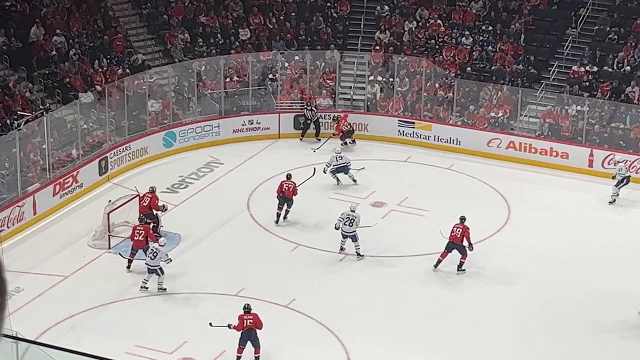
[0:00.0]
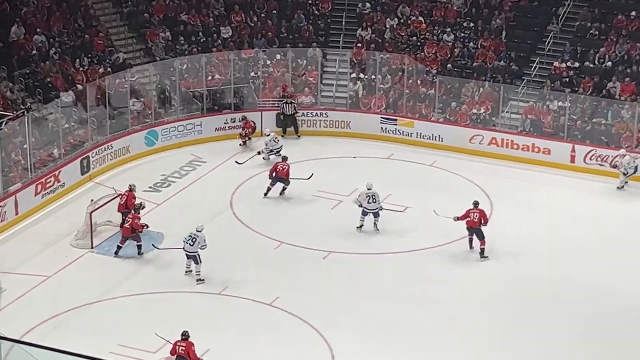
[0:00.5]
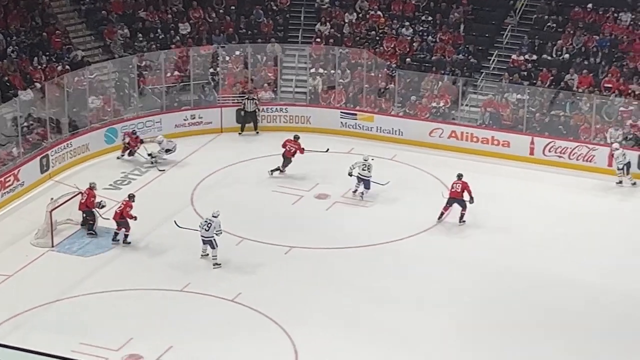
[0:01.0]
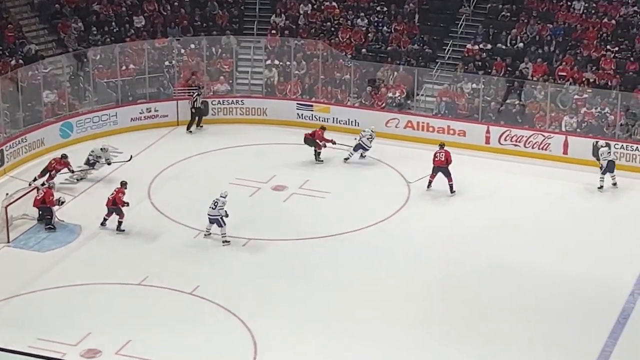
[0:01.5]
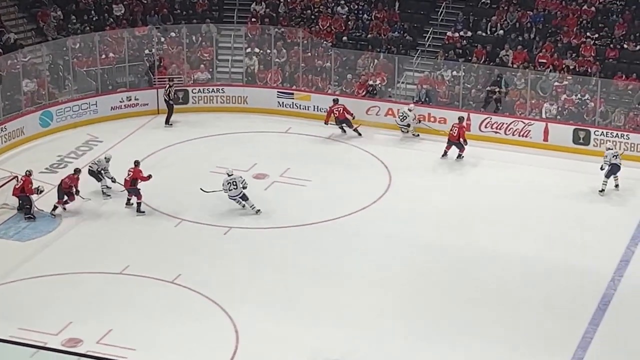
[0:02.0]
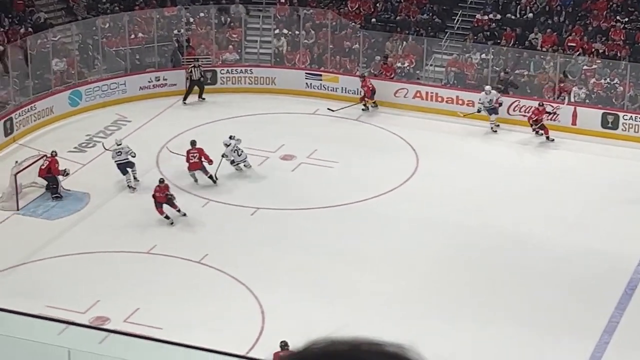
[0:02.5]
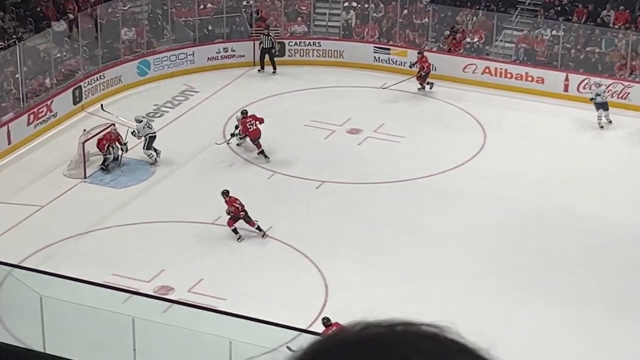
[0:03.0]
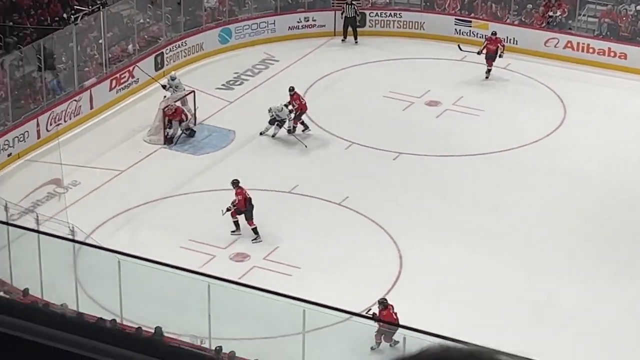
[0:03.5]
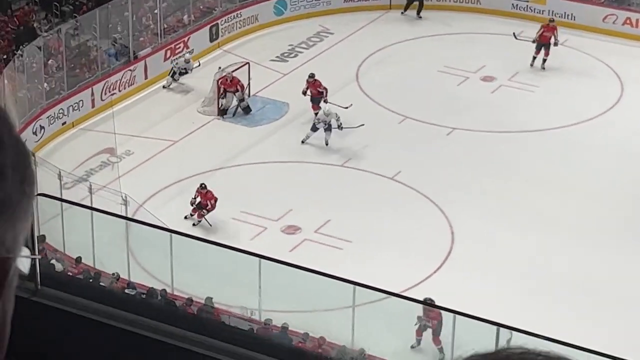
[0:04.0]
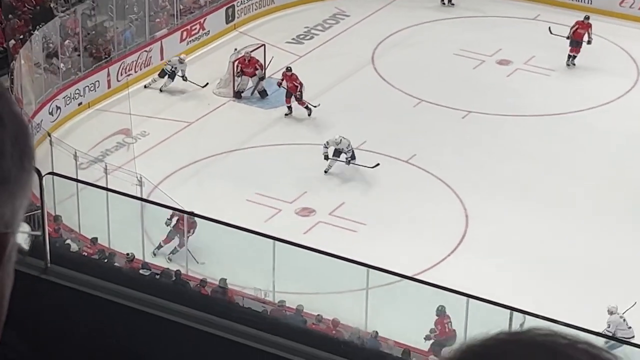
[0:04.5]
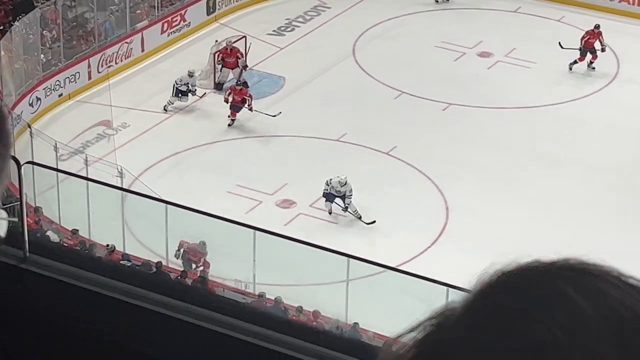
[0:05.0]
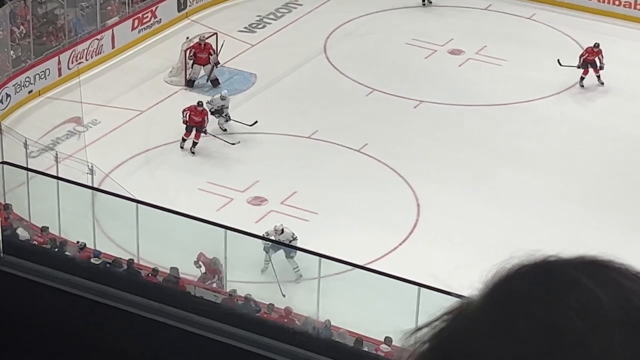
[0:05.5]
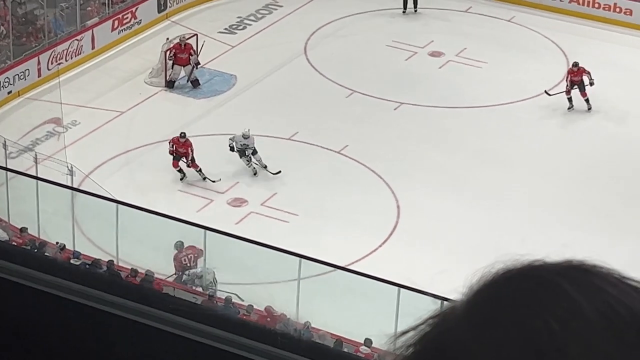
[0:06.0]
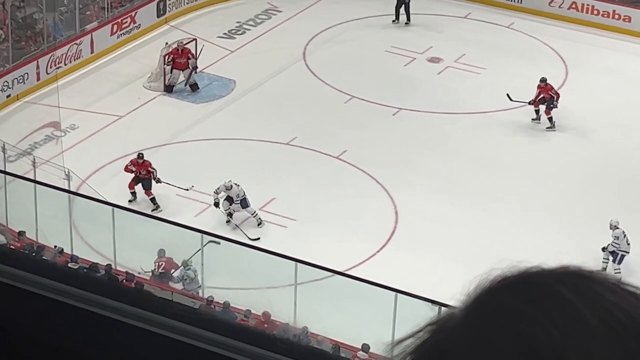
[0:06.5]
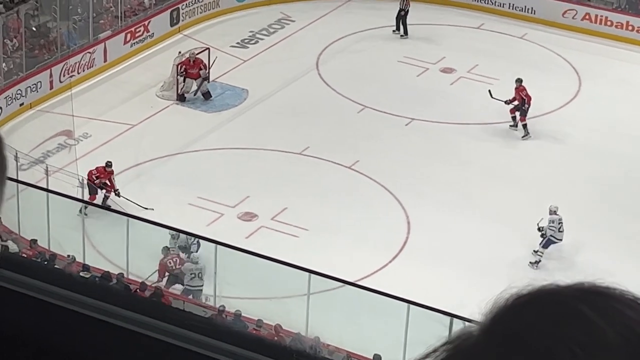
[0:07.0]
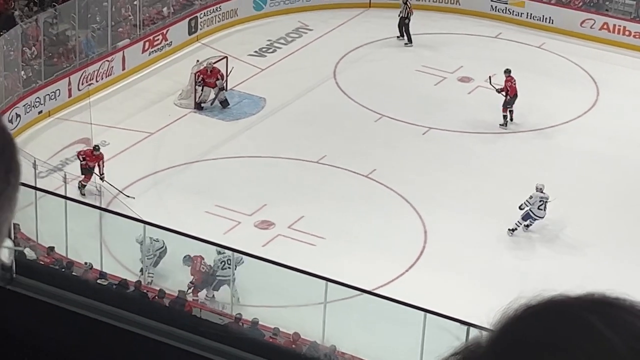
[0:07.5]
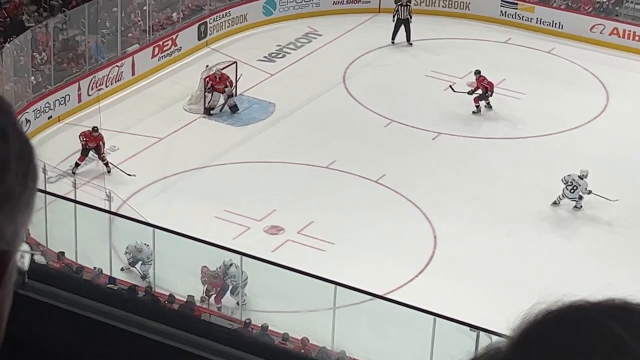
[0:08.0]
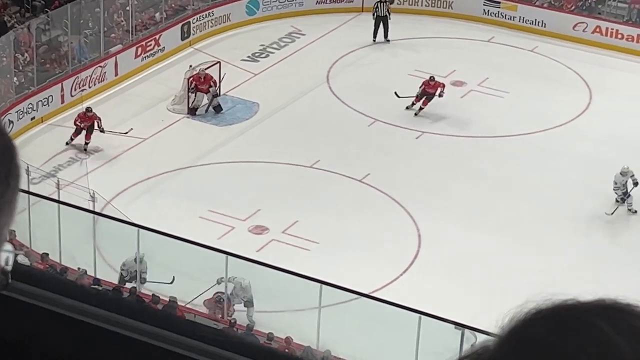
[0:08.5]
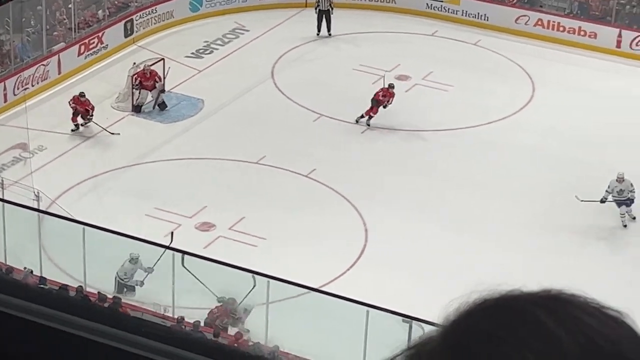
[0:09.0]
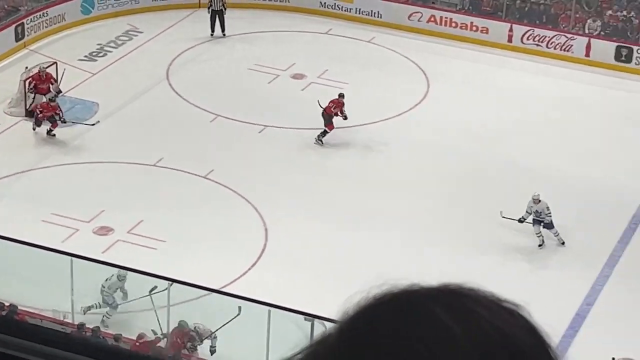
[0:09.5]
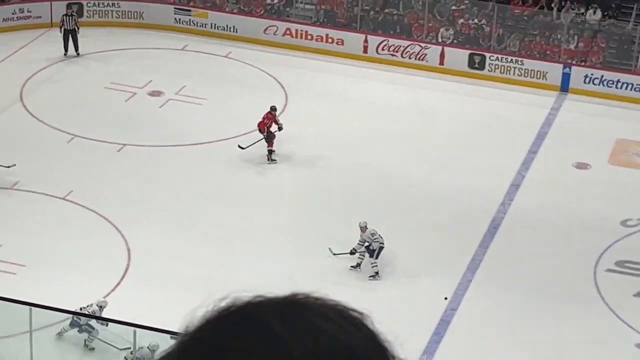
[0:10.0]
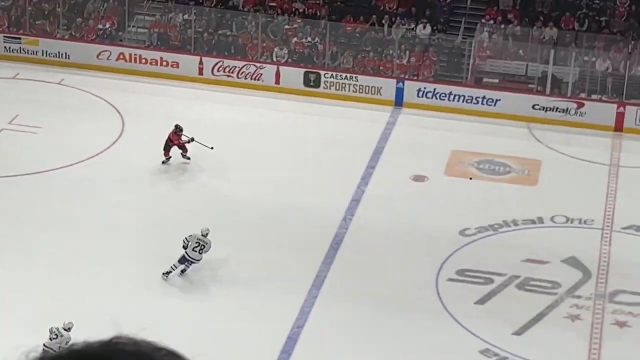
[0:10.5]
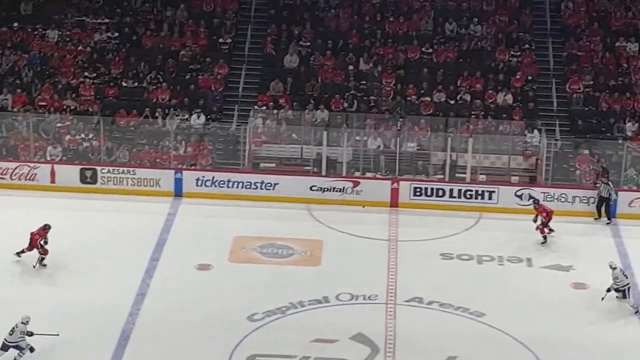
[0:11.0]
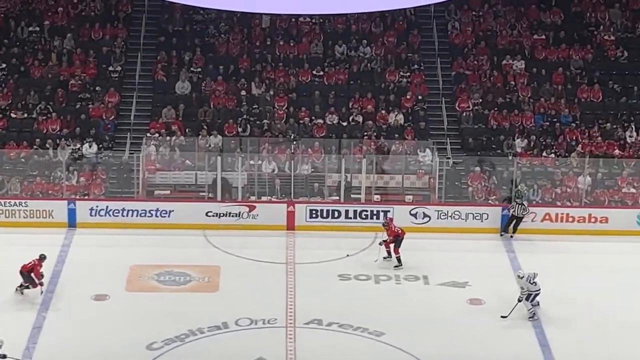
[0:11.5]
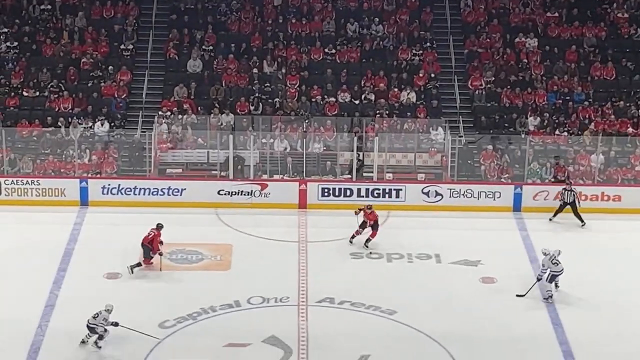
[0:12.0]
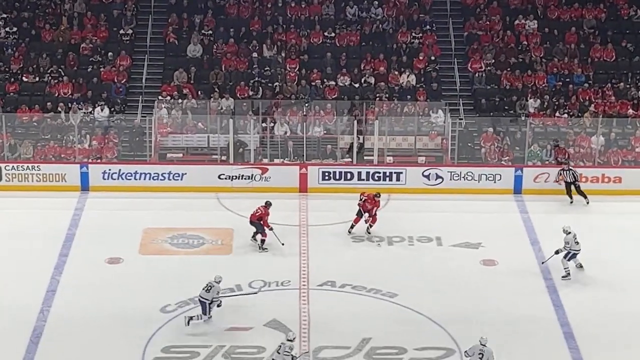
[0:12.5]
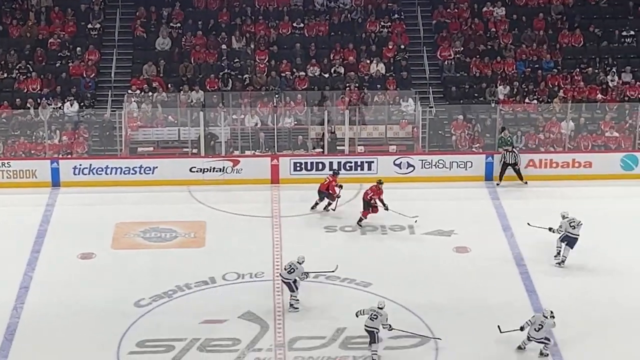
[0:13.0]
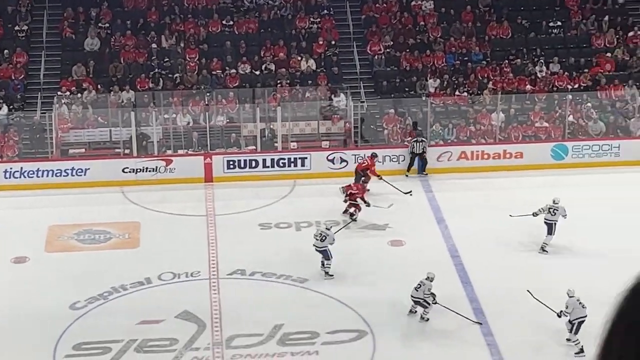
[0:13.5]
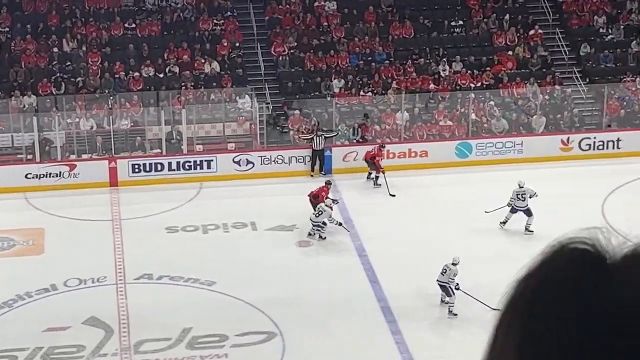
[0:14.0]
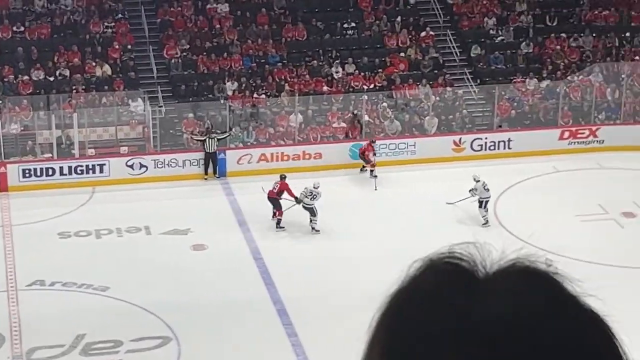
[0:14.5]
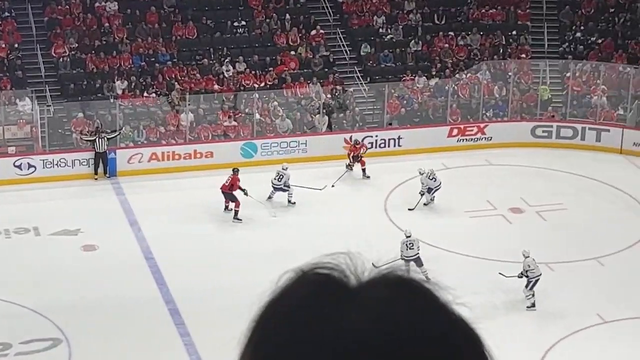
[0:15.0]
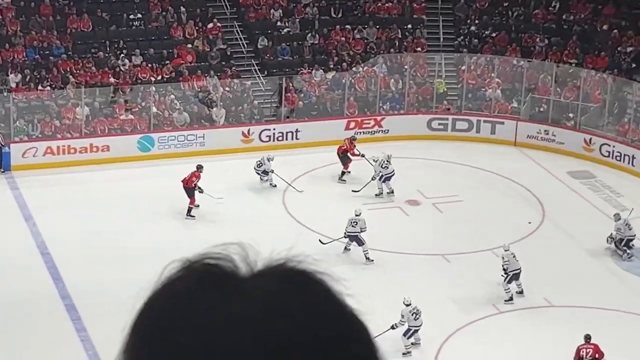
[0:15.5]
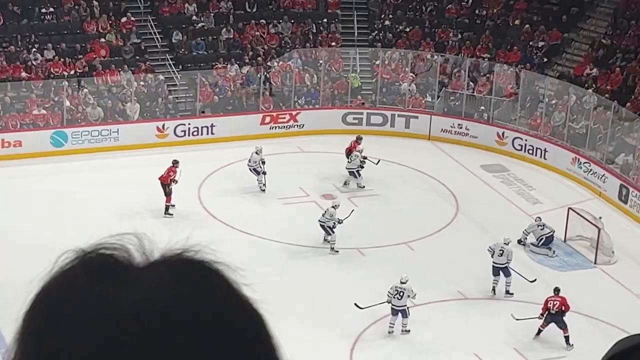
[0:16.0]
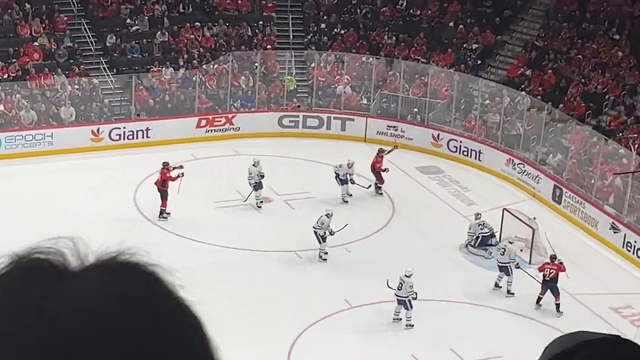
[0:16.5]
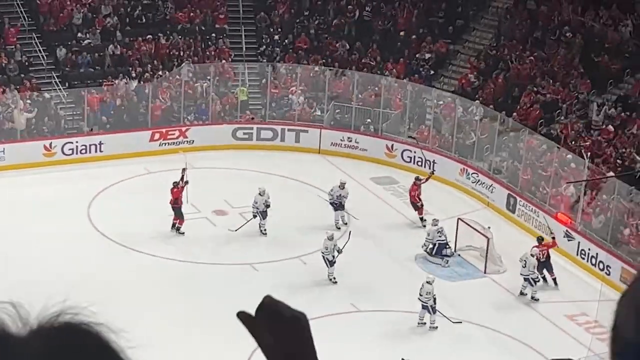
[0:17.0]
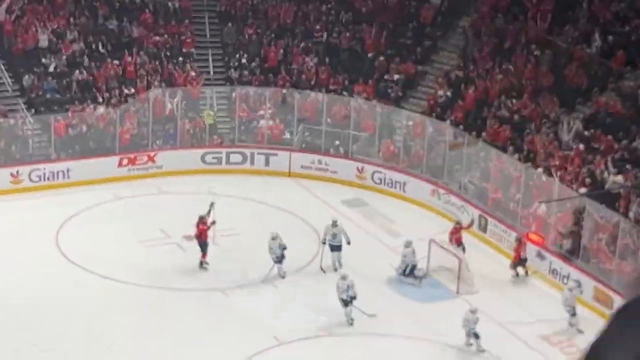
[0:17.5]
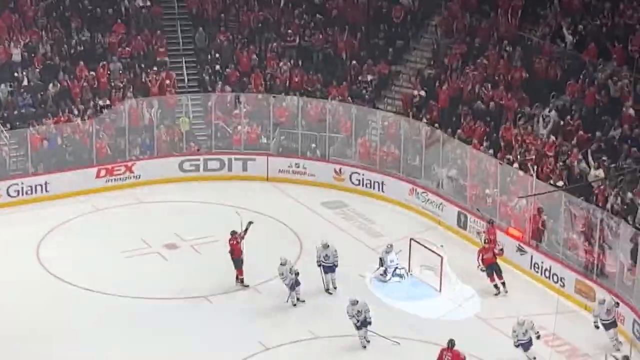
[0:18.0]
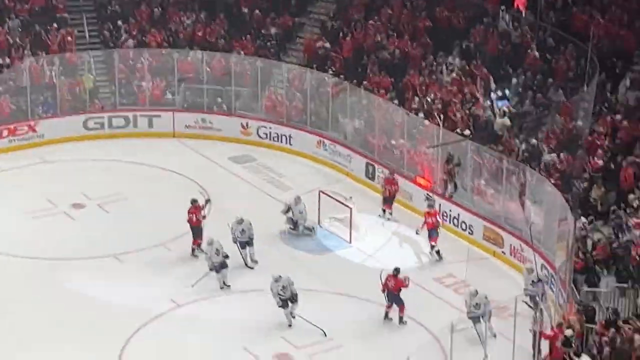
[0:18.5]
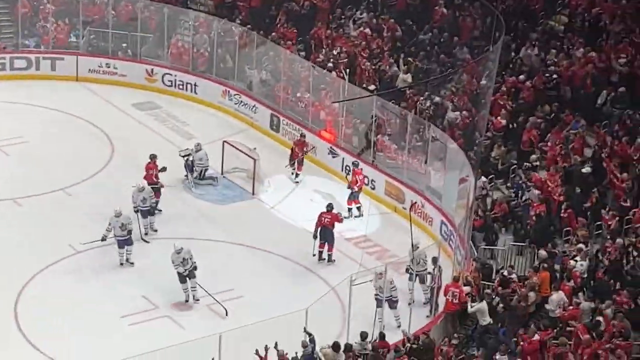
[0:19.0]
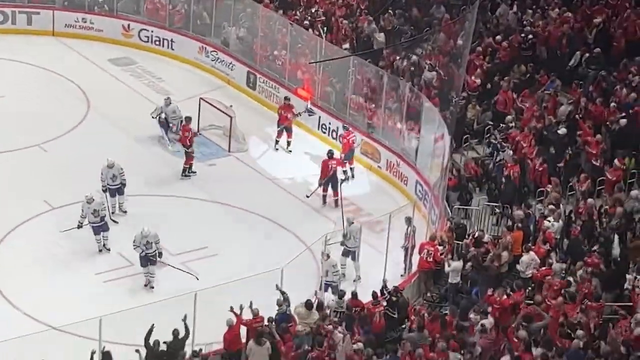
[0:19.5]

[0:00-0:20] A hockey game is underway, apparently the Blues versus the Blackhawks. Grown men with sticks skate around a rink that has shielding up around it, inside a stadium with people and stairs. At first five players from the red team and four from the white team are visible, and as play continues more players come into view; some of them seem to be offside. The puck moves back and forth across the rink, and a goal is scored against the goalie. People cheer as the red team scores and celebrates, while the white team gets on the ground and cries.